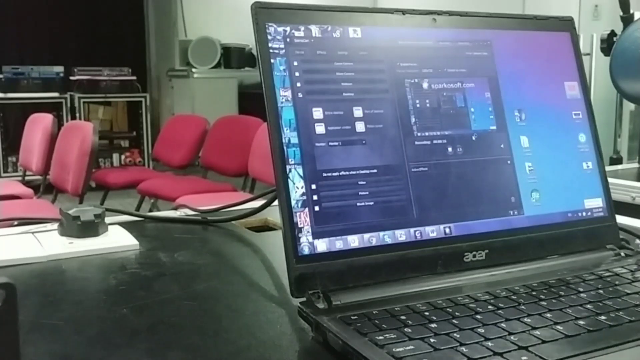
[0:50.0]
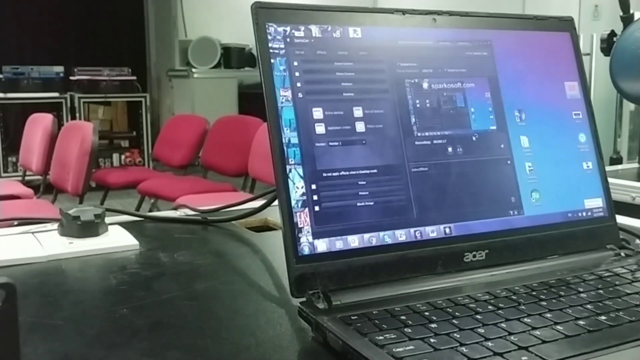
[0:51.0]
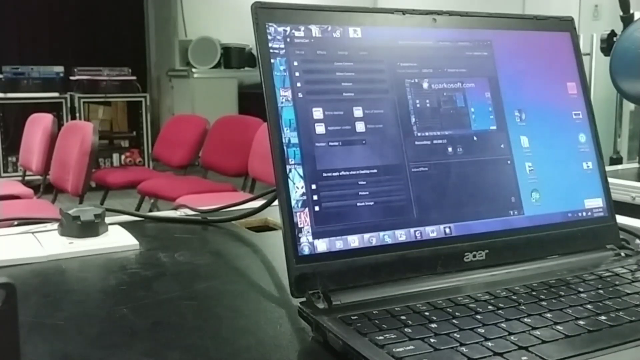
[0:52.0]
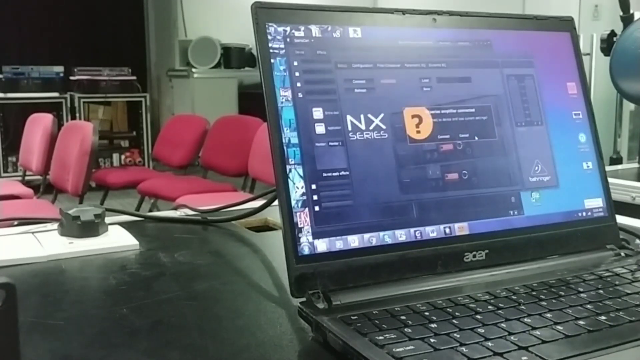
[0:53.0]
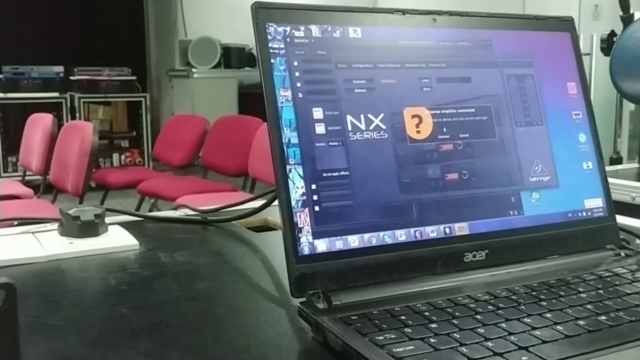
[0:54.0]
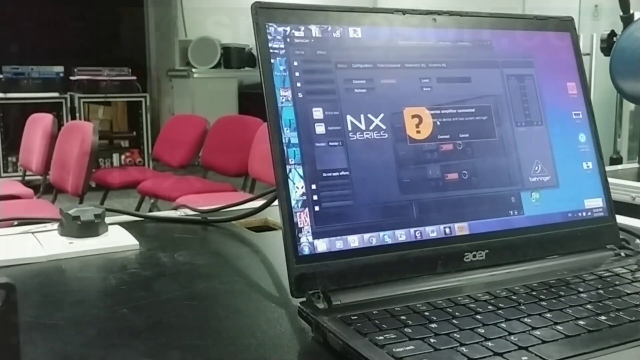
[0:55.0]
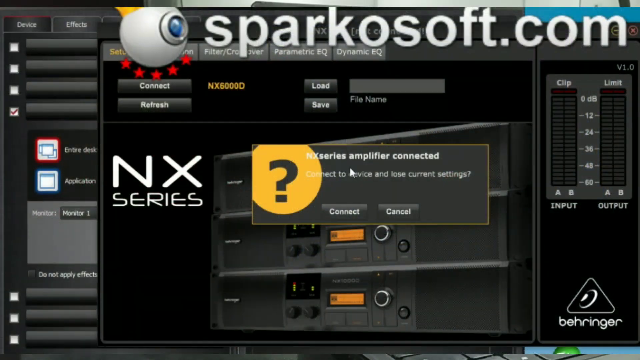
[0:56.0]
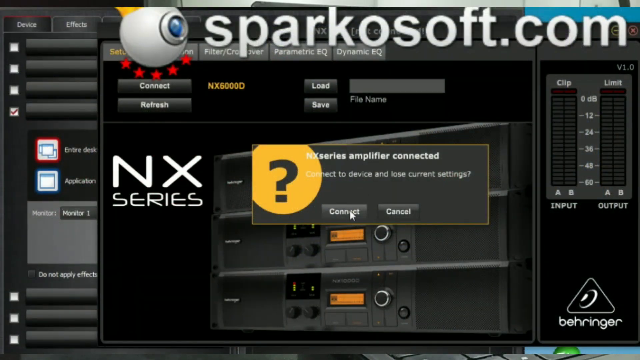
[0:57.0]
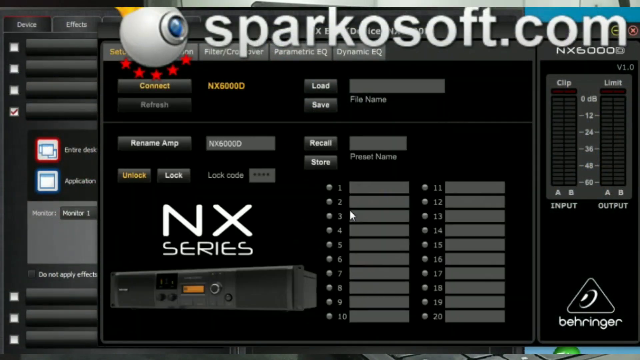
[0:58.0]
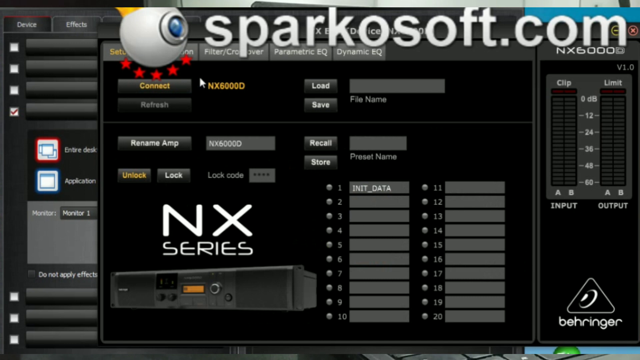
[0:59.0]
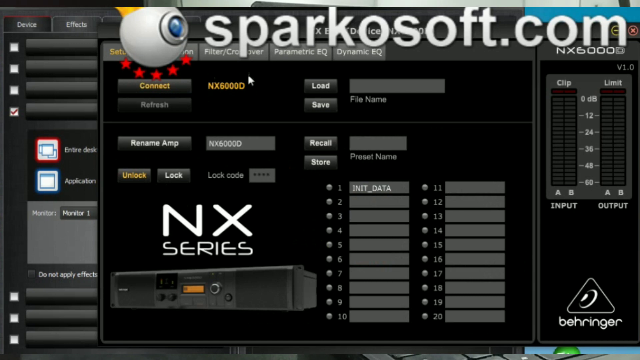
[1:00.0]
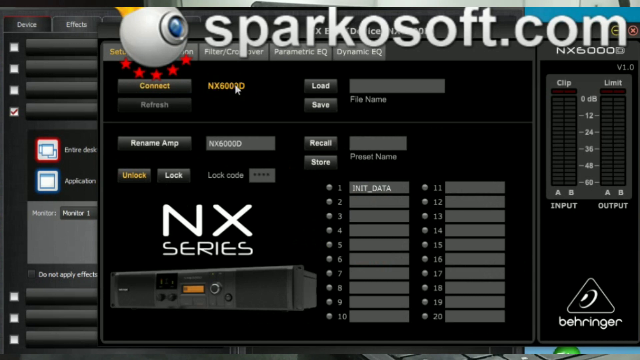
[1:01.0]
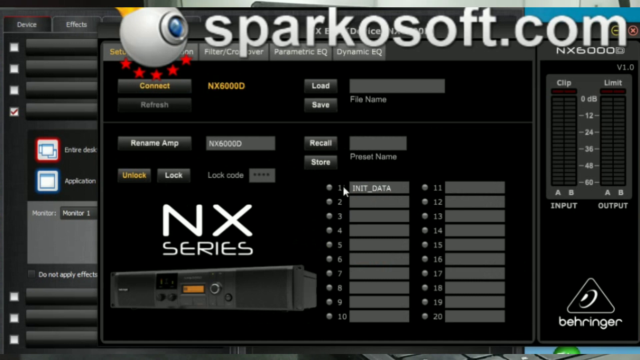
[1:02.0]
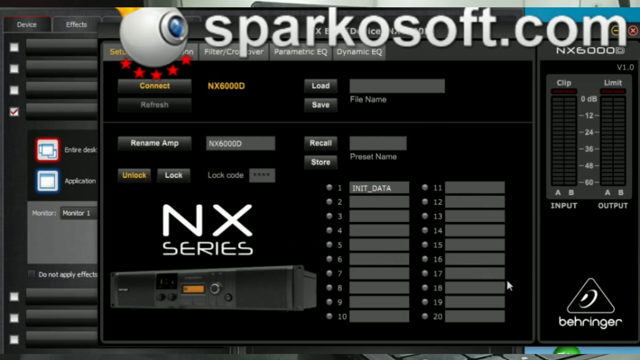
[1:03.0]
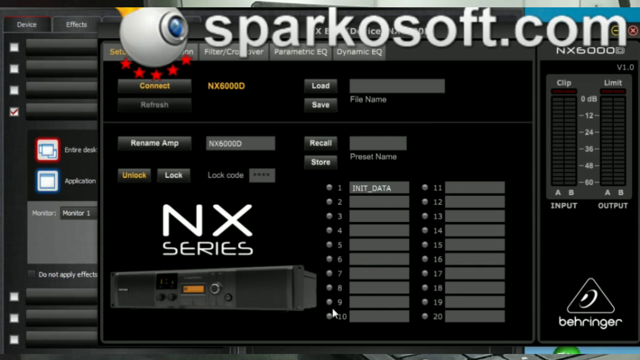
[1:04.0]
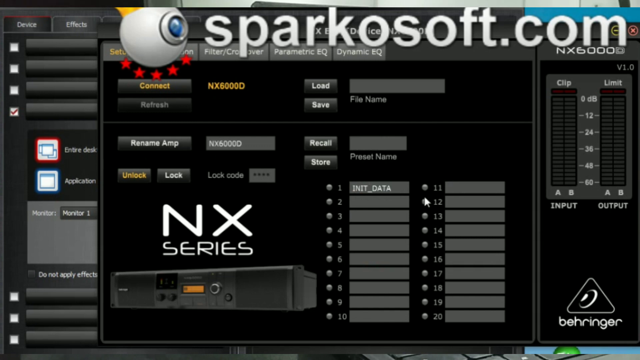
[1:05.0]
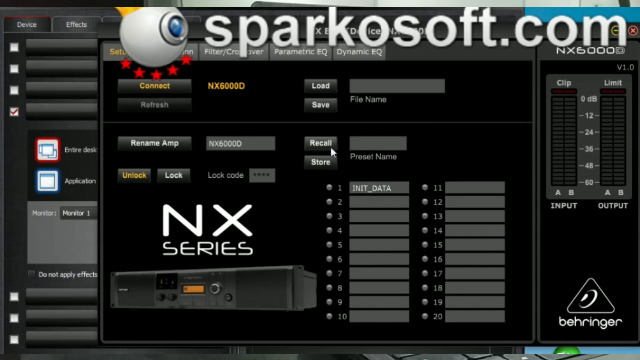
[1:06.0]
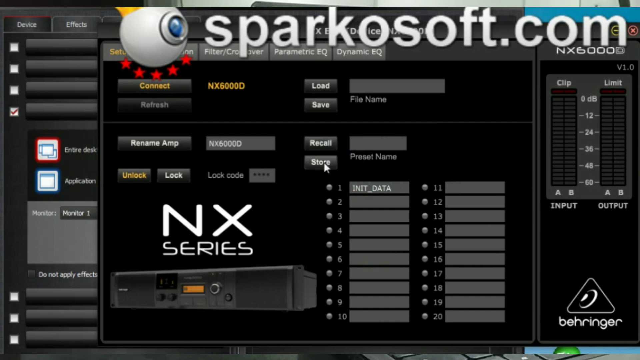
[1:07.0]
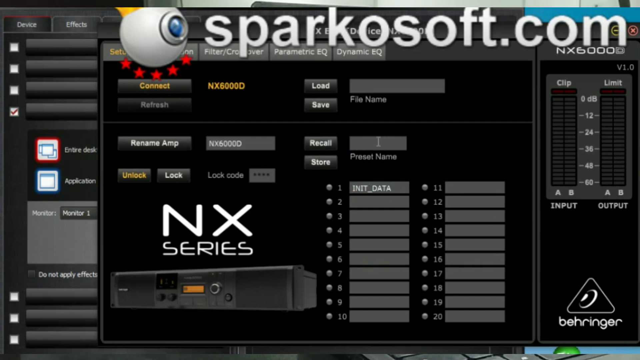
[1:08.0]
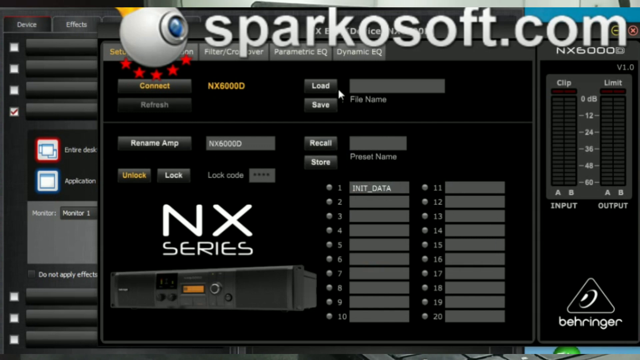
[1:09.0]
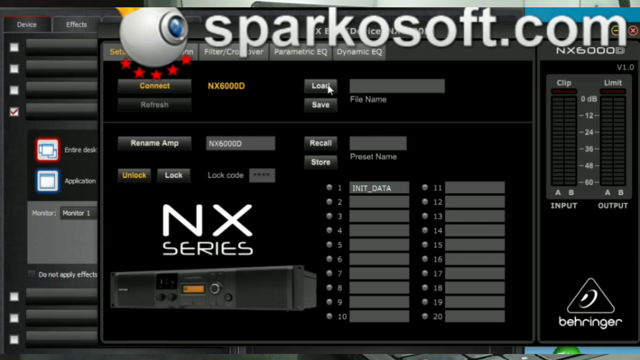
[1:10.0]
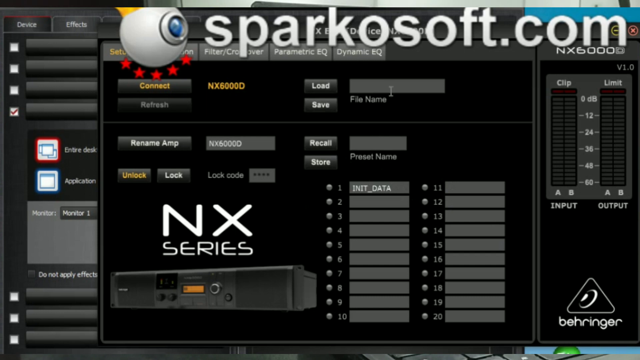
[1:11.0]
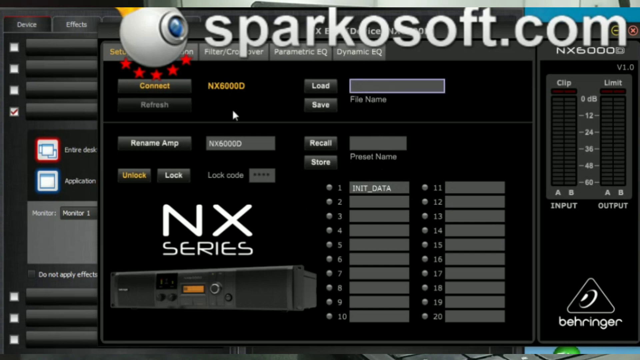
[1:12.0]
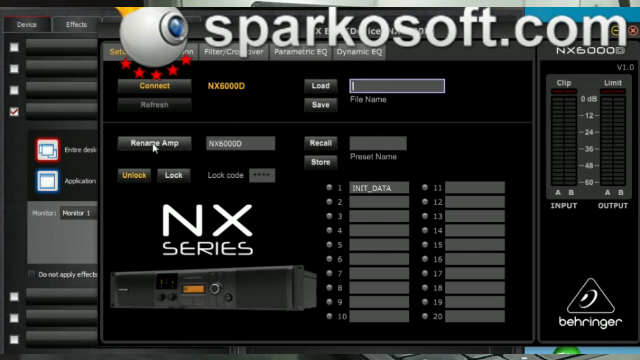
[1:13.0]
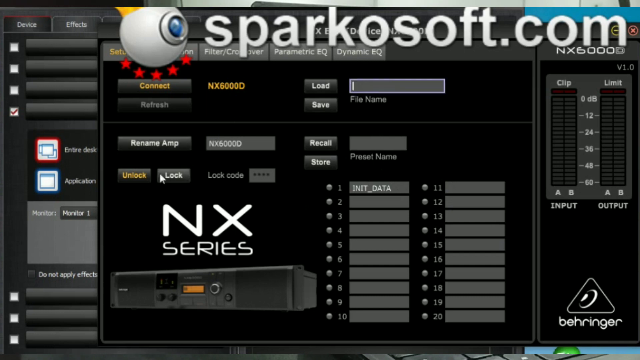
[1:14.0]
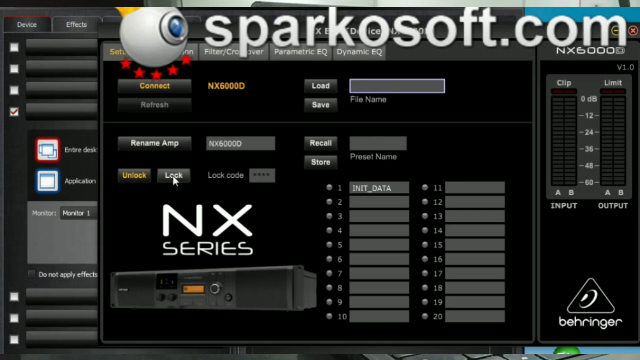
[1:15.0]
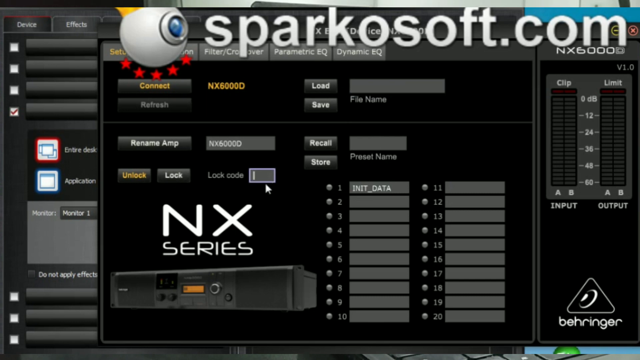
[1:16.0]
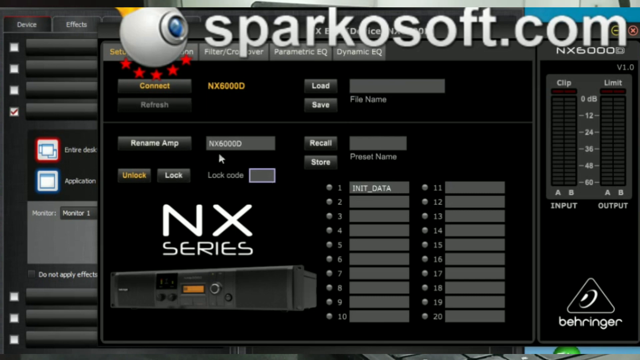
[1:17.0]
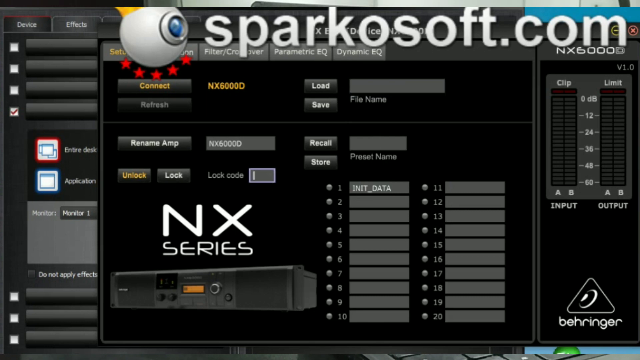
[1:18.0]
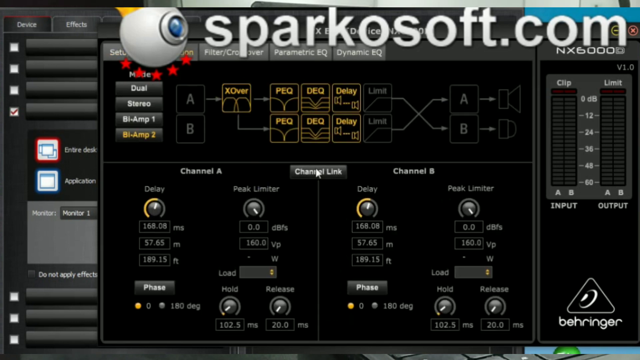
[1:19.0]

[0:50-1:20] The full laptop is shown on the black desk with the pinkish-reddish chairs in the background. The view then transitions to what appears to be the program the user was working on, showing only the program. The website "sparkosoft.com" is in very visible letters at the top of the screen. The mouse moves around, which looks like it is giving direction on what is being done. The words "next series" are clearly visible, presumably a descriptor of the audio hardware. The user clicks around within the screen, and a pop-up window with a big black question mark in an orange circle appears and is clicked off. The mouse moves to an area that says "connect" and then "NX6000D". "Load" is clicked, then "lock code", and the view moves to a different screen that looks to be some sort of network architecture for the equipment.